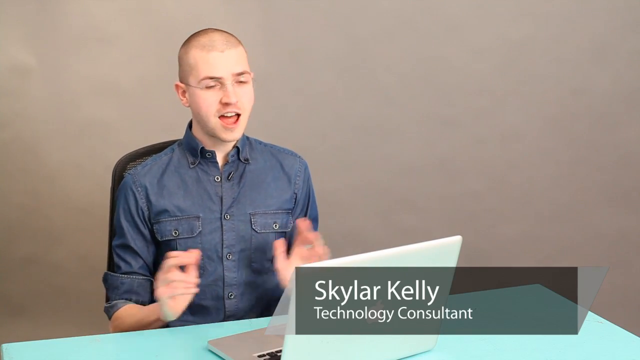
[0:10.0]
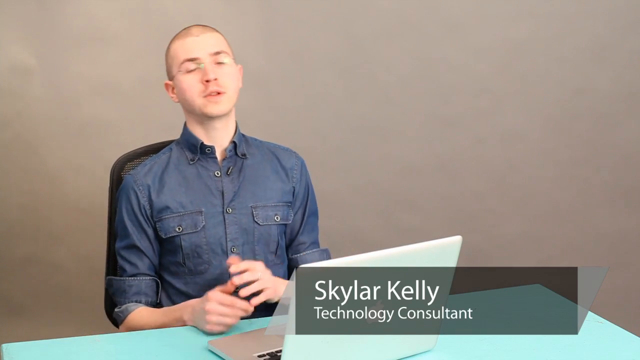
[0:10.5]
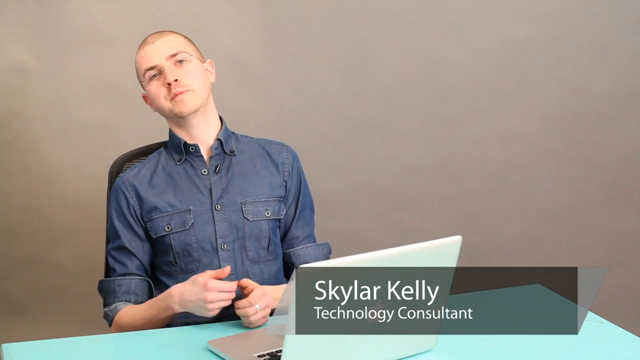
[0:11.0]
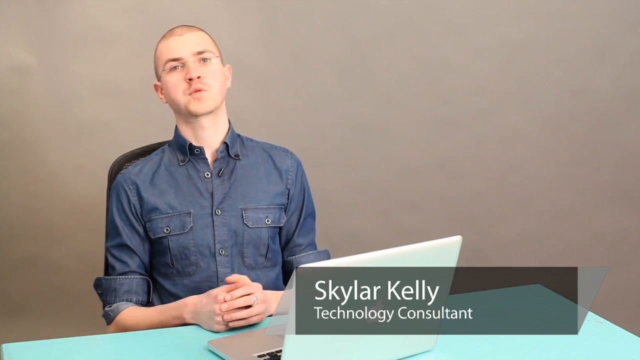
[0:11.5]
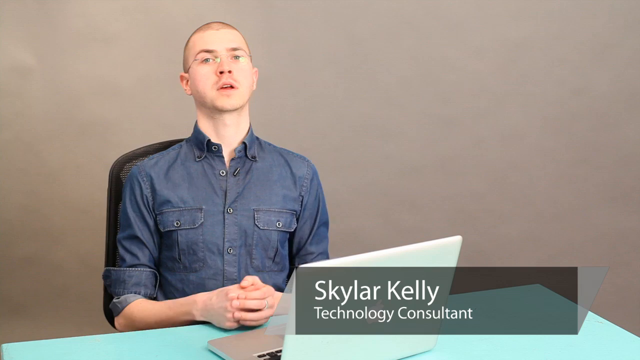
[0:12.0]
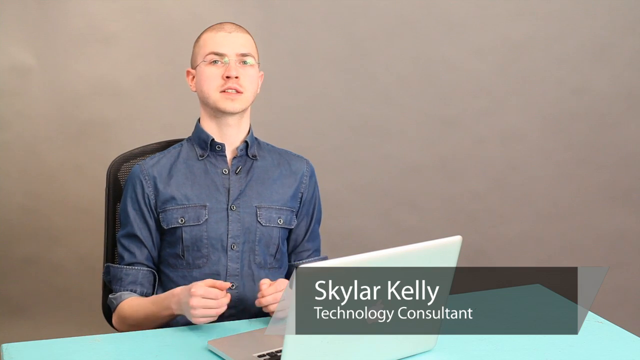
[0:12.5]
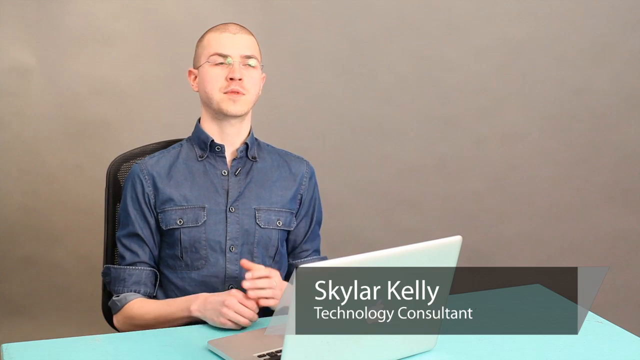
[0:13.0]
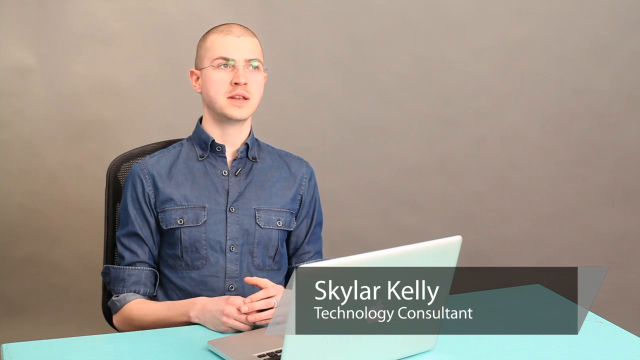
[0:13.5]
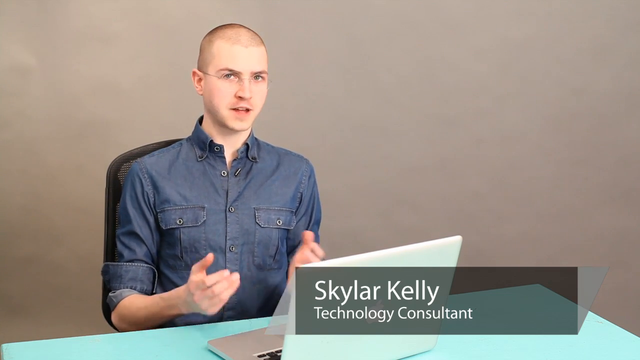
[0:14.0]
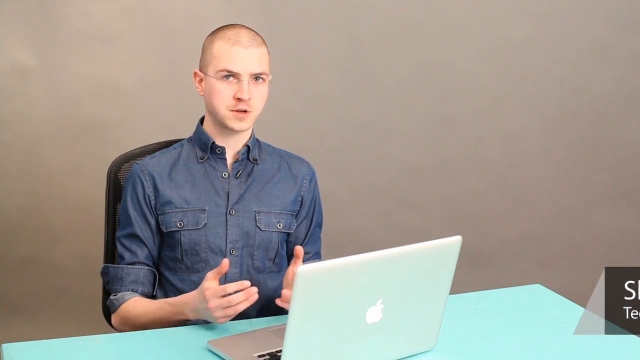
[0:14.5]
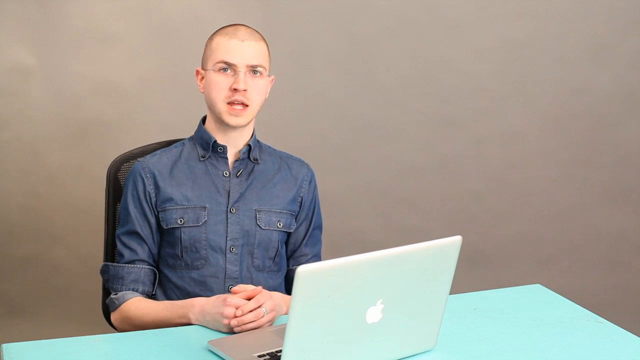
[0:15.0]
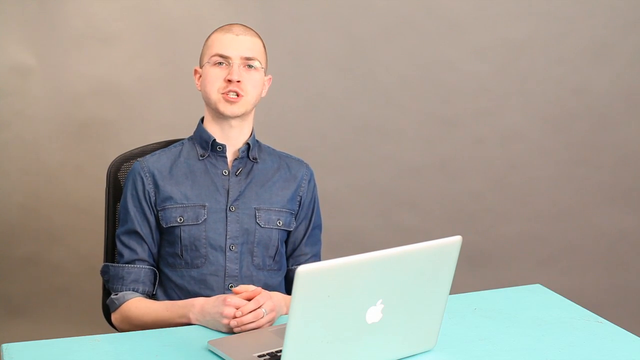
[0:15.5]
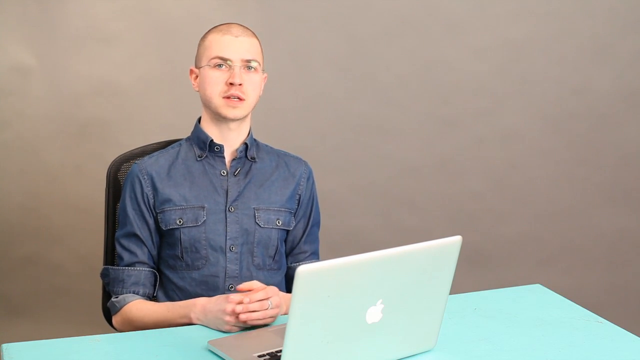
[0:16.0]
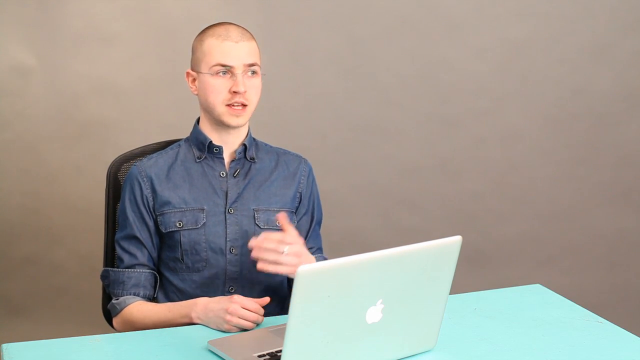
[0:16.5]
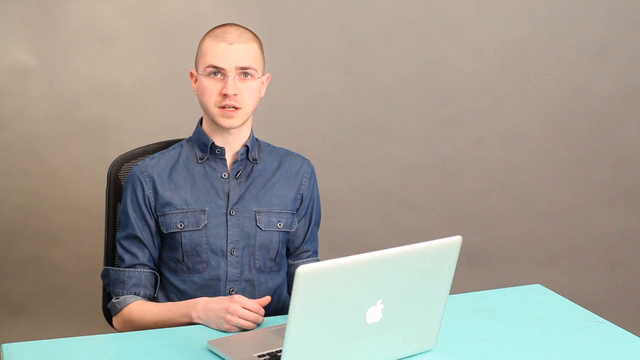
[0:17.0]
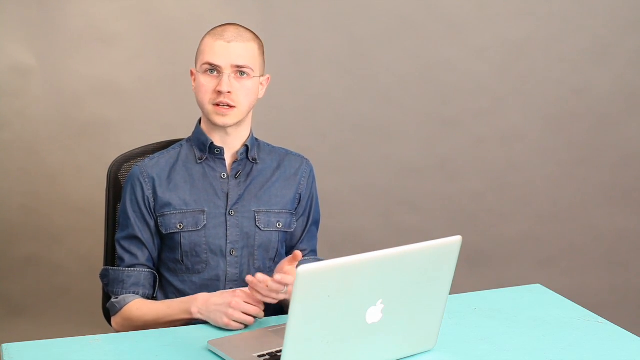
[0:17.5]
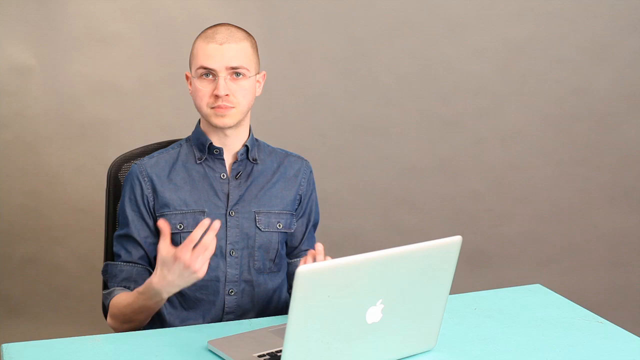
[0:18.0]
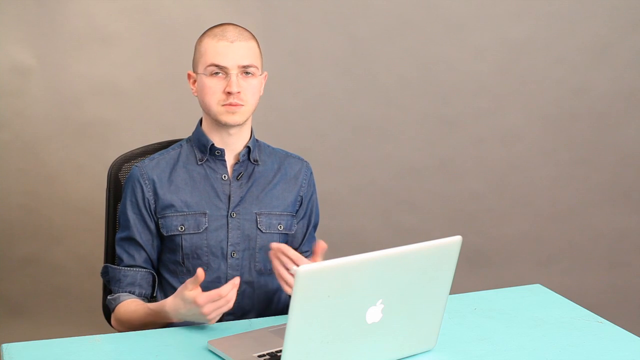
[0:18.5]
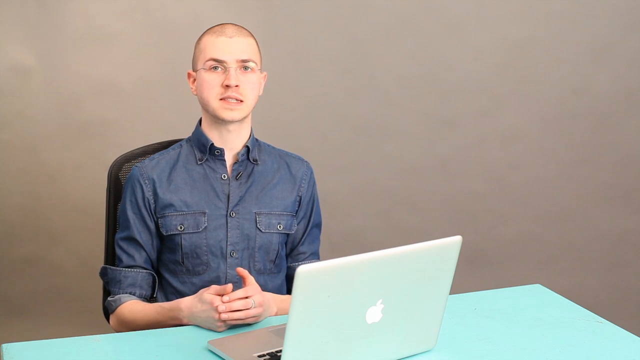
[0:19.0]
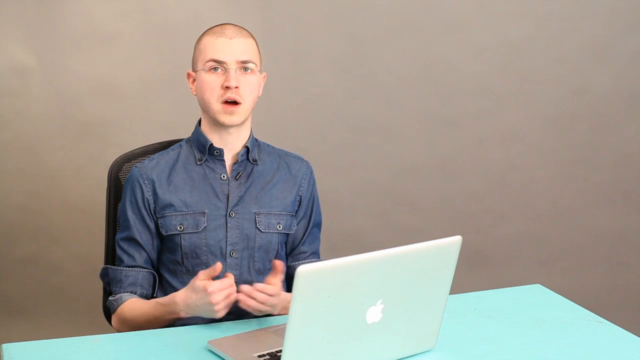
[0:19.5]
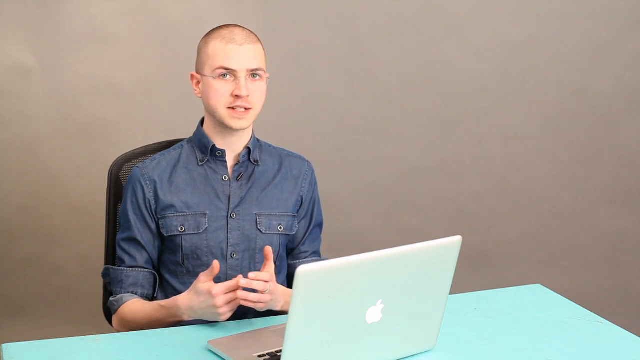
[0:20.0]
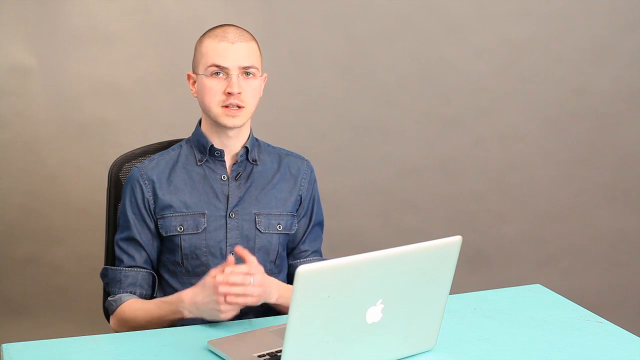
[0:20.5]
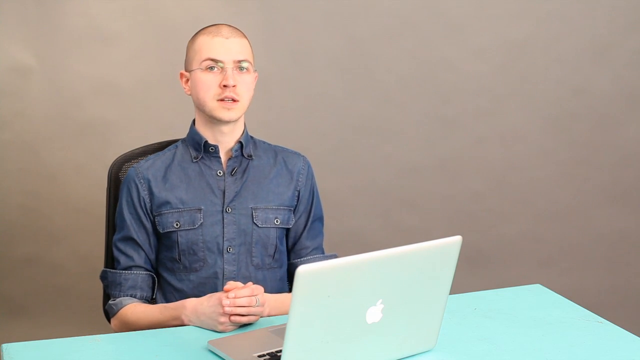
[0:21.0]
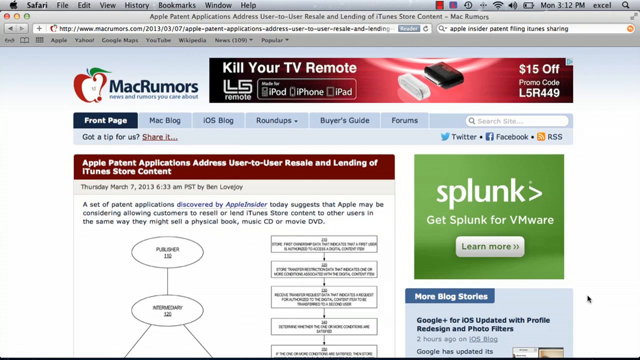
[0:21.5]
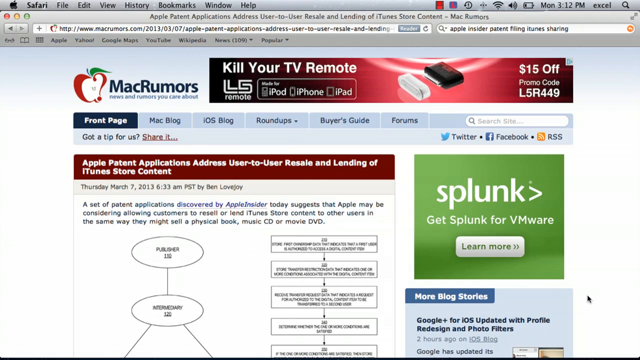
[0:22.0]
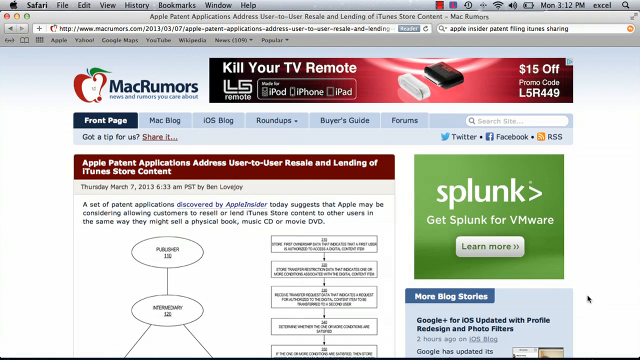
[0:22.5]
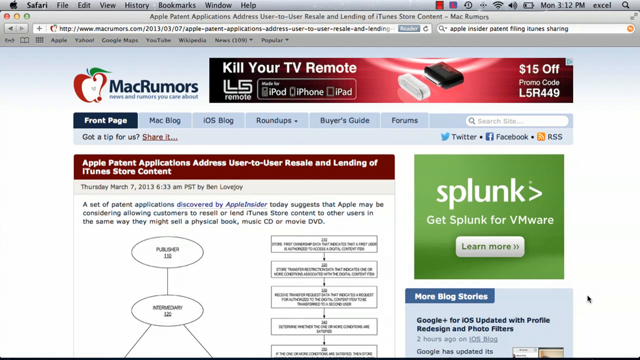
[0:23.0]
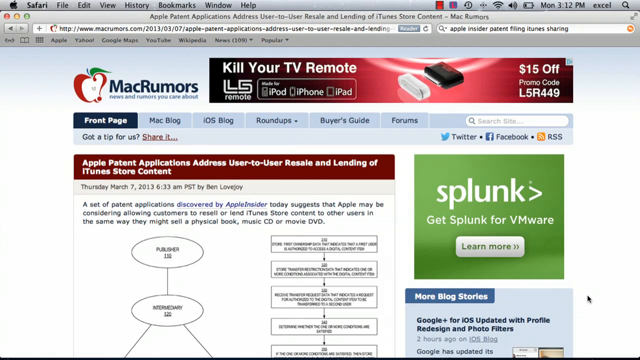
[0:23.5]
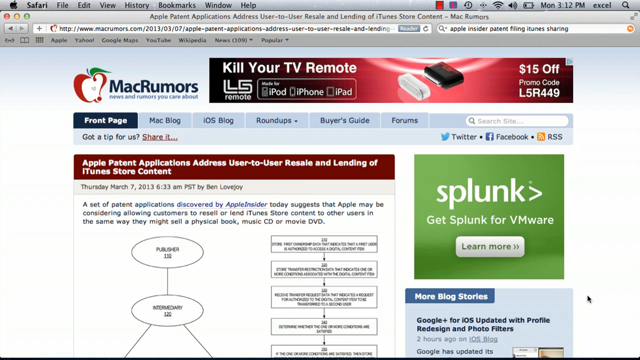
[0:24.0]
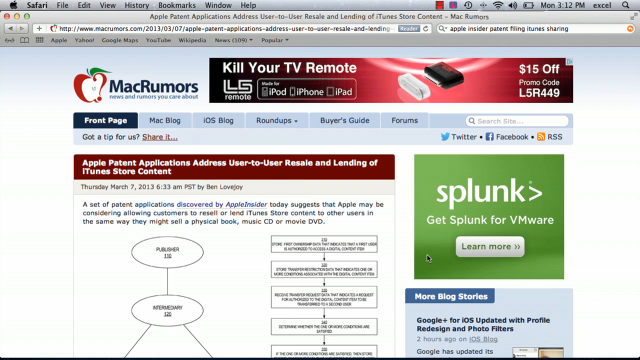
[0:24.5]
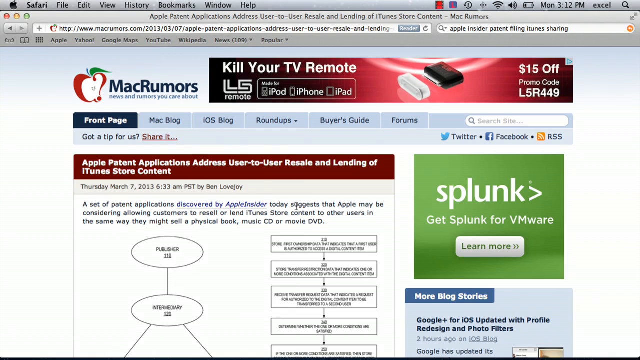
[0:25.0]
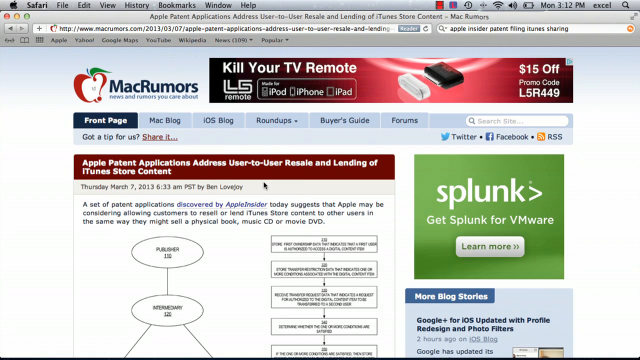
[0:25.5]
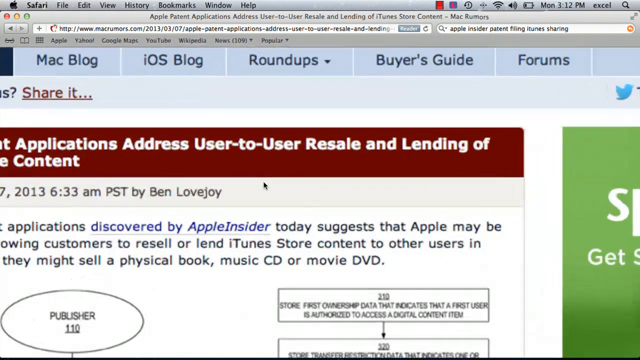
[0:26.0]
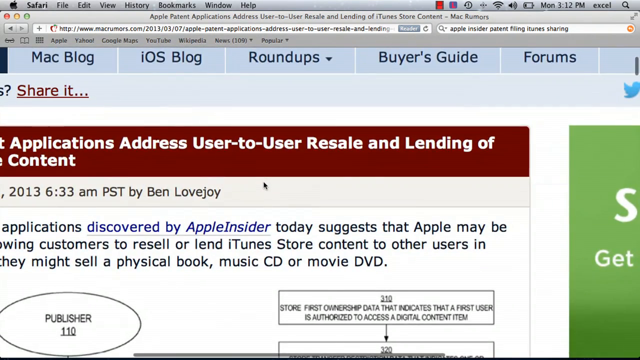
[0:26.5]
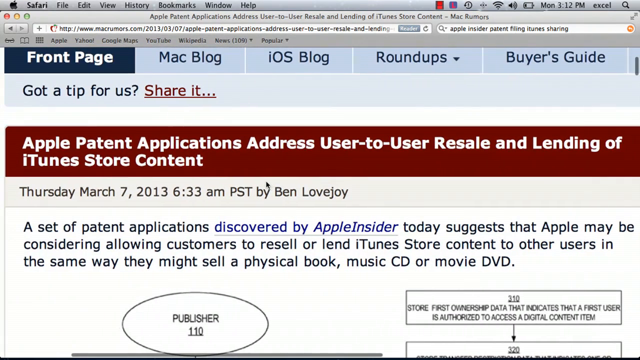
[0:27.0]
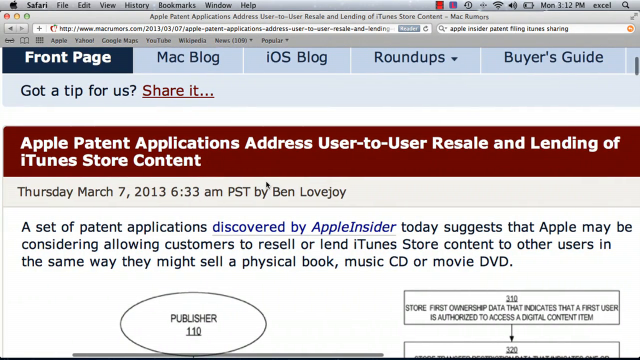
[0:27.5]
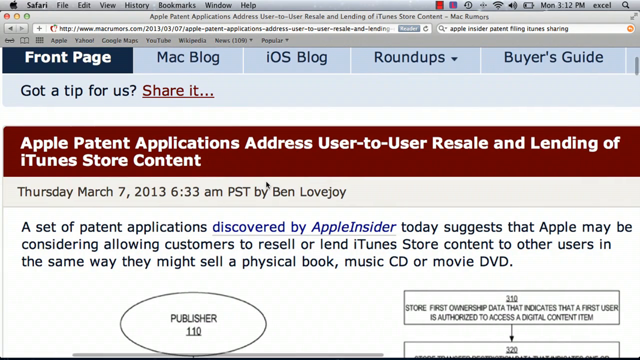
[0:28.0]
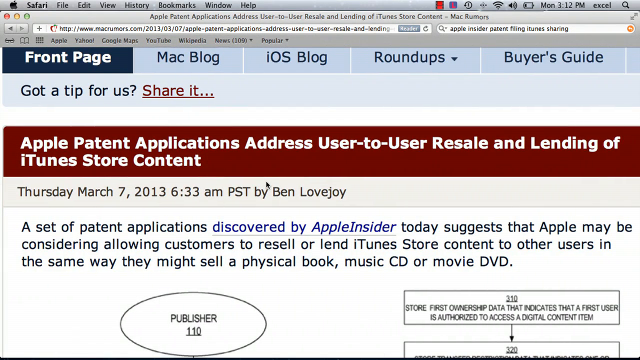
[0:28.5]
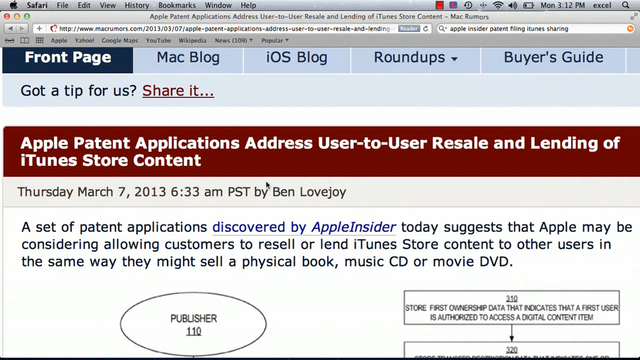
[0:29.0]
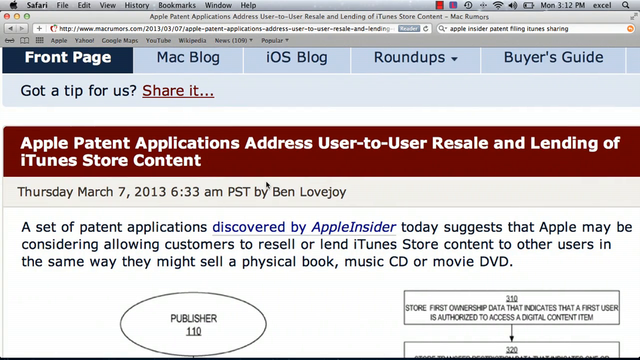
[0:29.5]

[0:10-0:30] Skyler Kelly, the Caucasian man of around 25 with short hair, glasses and a kind of blue denim shirt, is shown with a Mac, probably a Macintosh laptop, in front of him on a sort of bluish table, against a kind of beige-ish gray background. He is seen kind of explaining something. The screen then transitions to a web page in a Mac web browser, on a site called Mac Rumors, where the front page presents information about Apple patents, applications and iTunes Store content. Skyler Kelly is the only person shown.